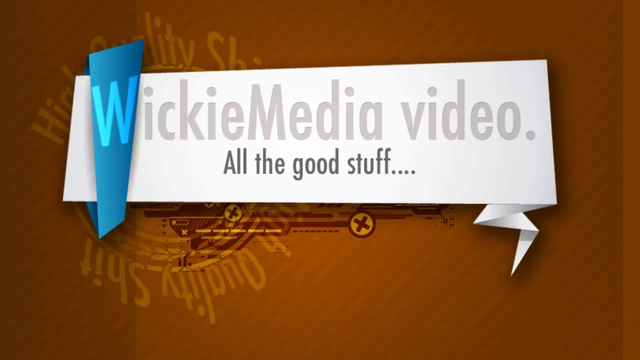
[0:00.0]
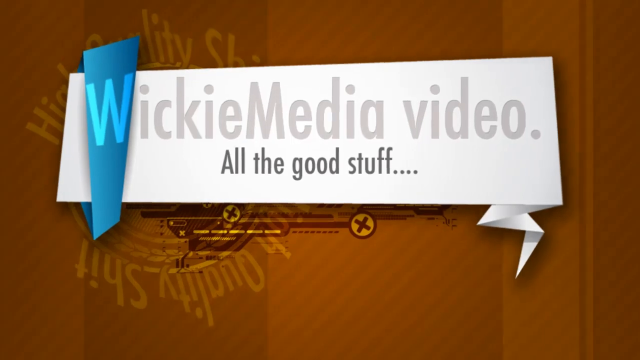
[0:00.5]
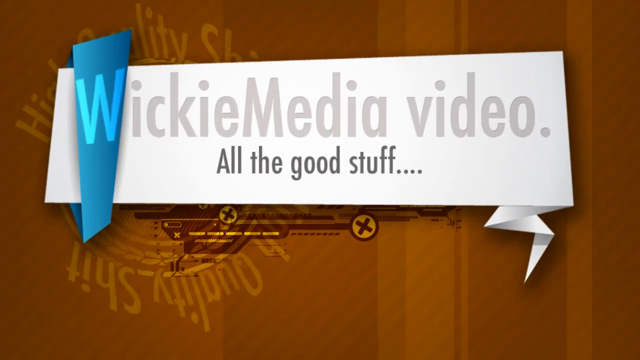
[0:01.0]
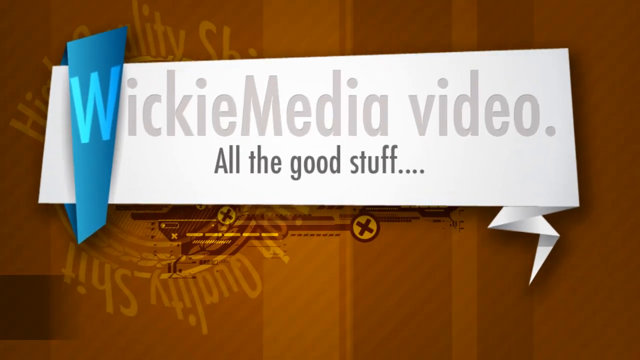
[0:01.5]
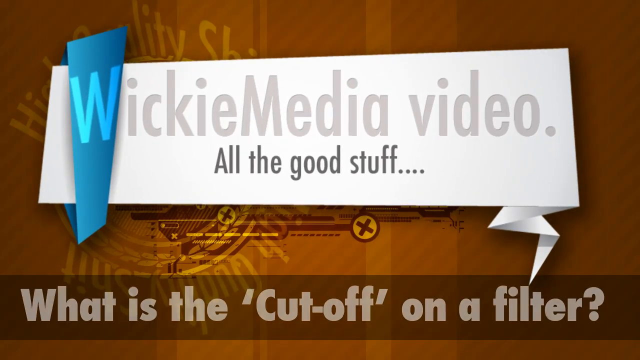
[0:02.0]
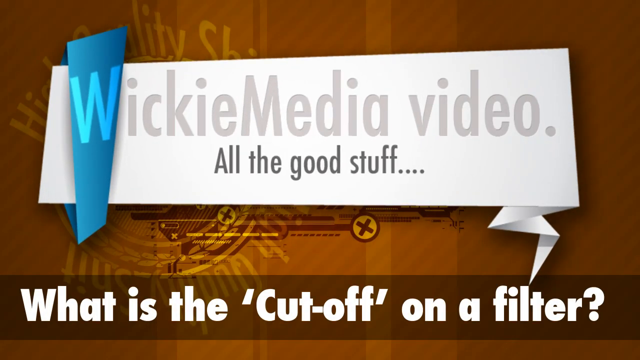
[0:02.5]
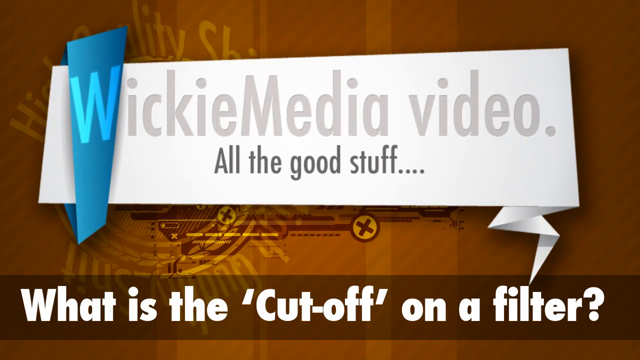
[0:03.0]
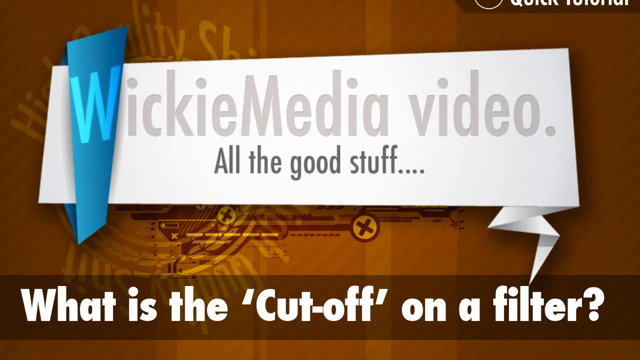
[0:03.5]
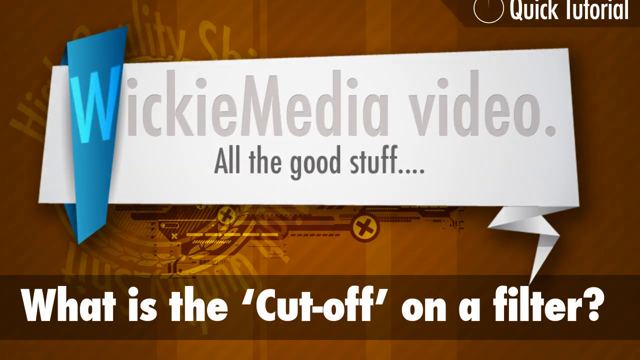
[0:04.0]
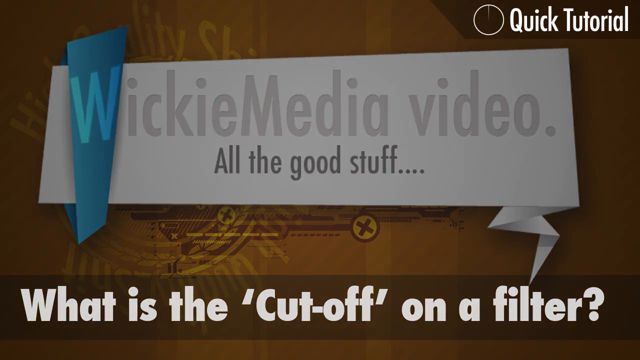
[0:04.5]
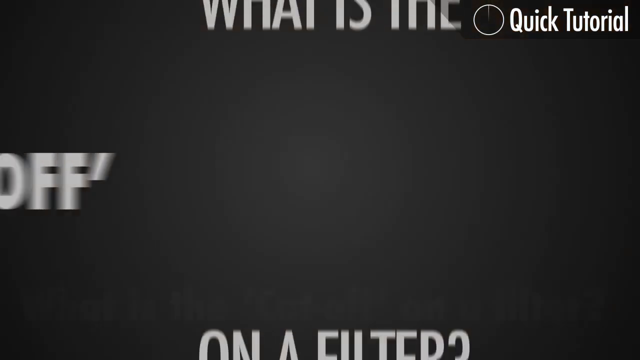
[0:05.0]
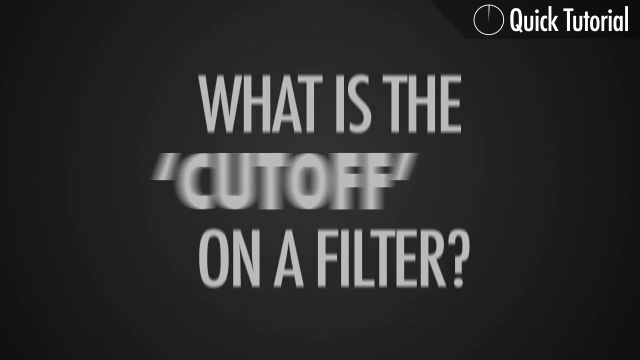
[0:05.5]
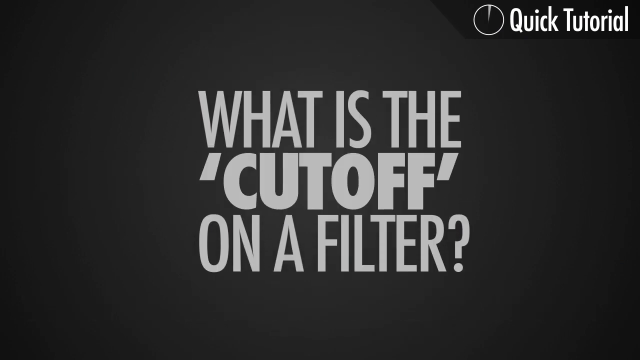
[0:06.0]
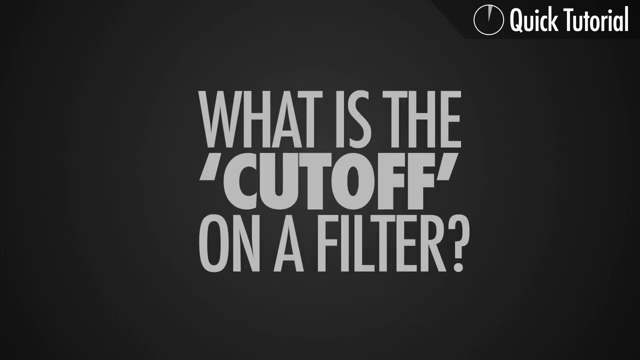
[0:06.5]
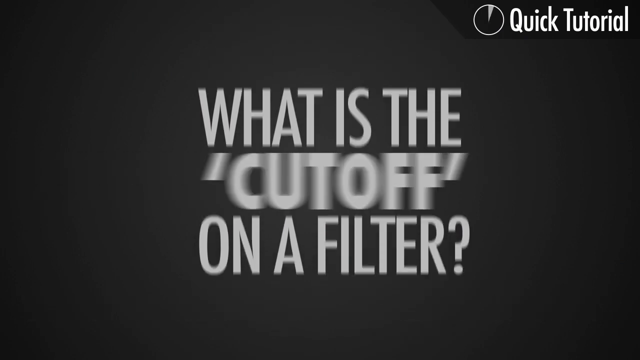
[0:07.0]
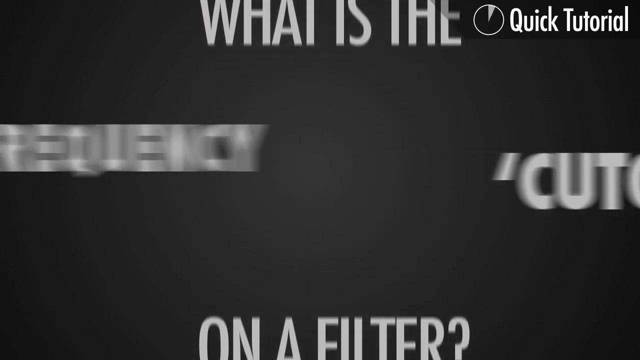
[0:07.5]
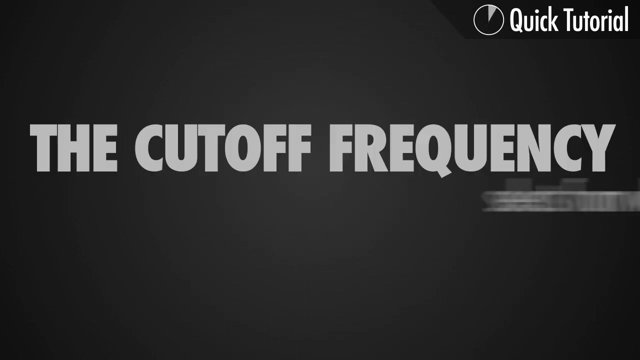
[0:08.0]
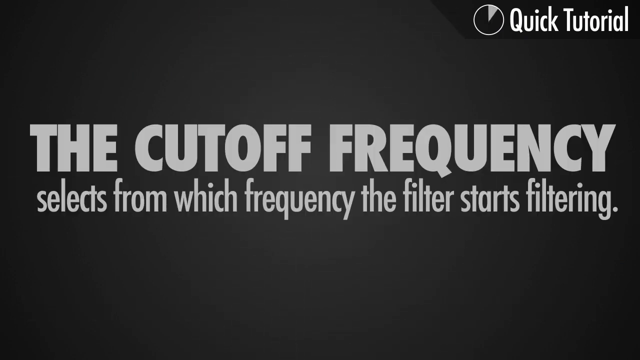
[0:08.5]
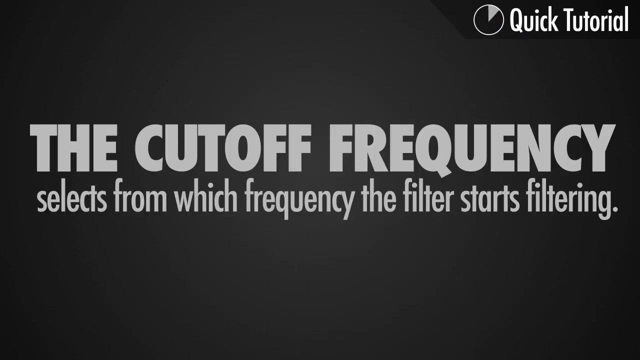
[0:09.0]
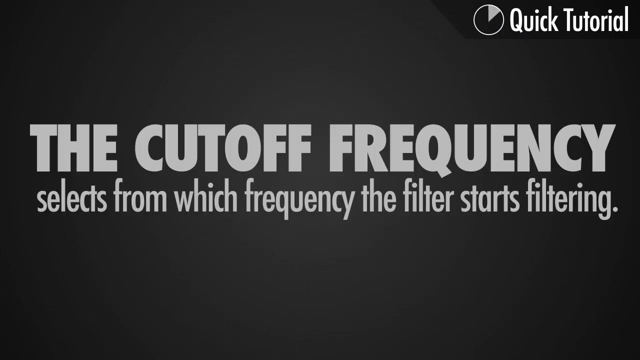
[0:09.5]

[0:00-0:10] The video opens on an orangish-brown background with text in the center and a big white rectangle behind it. Only some letters of text along the top and bottom are visible, reading "high-quality shit." The white rectangle has a little fold on its right side that kind of comes down, goes right and goes down. A light blue border surrounds a W, followed by "Wikimedia video" in gray and, below that in black, "all the good stuff." The graphic slowly moves in toward the camera, and bold white text across the bottom reads "what is the cutoff on a filter?" A dropdown appears in the top right reading "quick tutorial." The screen then fades to black, and in the center the question appears again in gray, bold, all-capital letters, ending "is the cutoff on a filter." That disappears, and text comes in from either side reading "the cutoff frequency selects from which frequency the filter starts filtering."